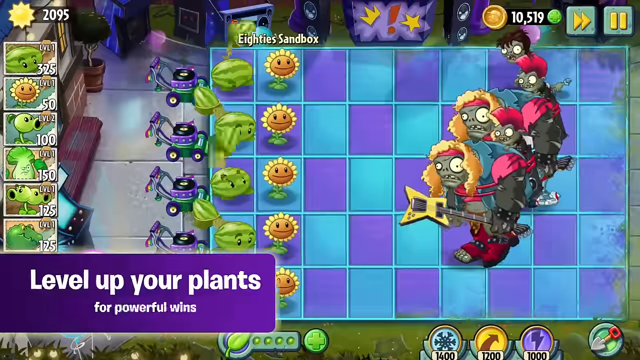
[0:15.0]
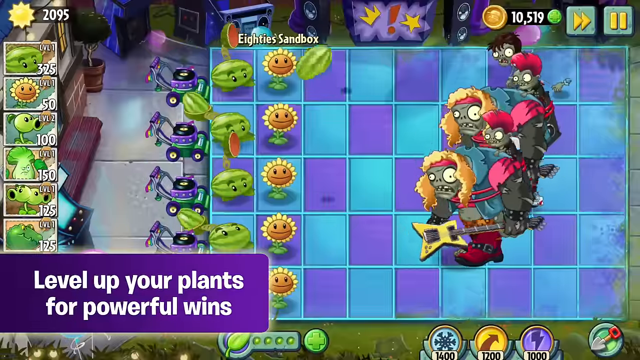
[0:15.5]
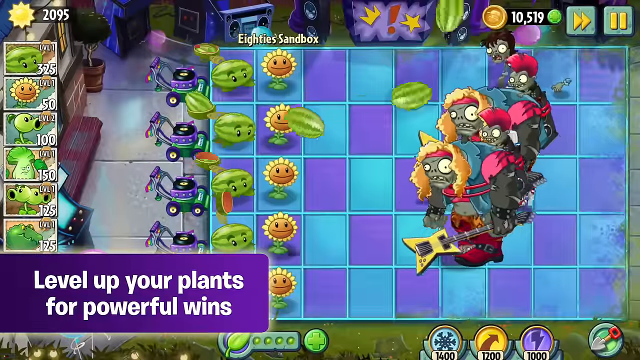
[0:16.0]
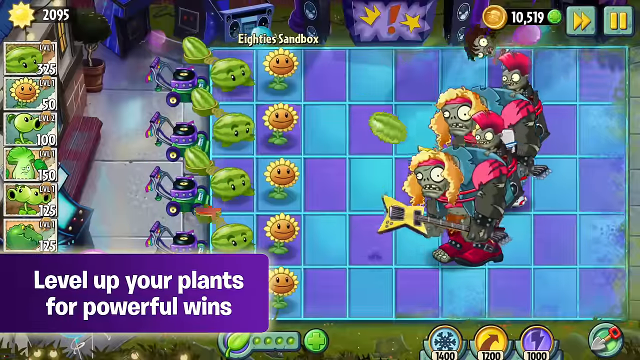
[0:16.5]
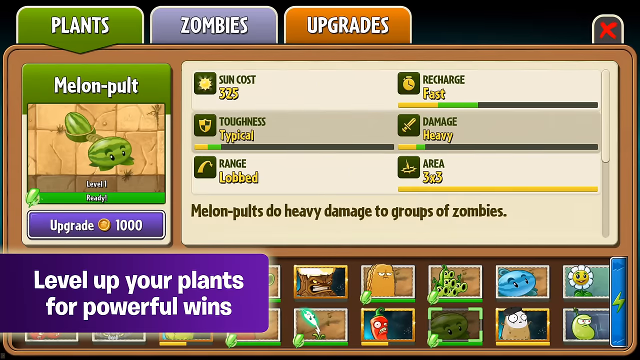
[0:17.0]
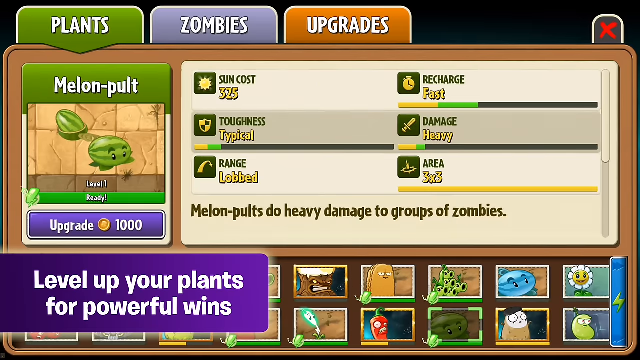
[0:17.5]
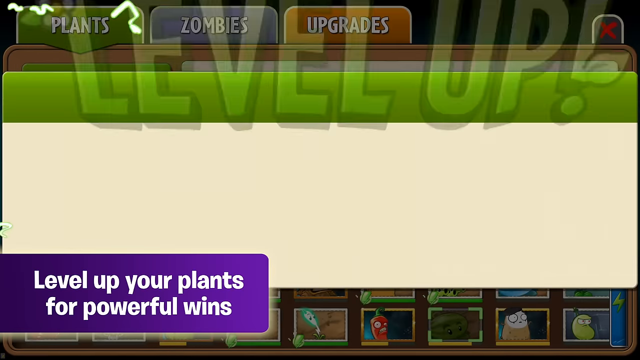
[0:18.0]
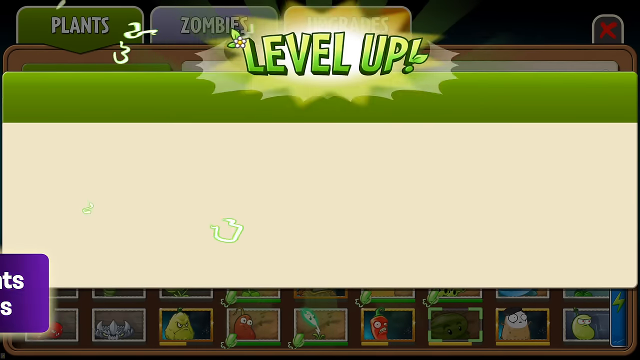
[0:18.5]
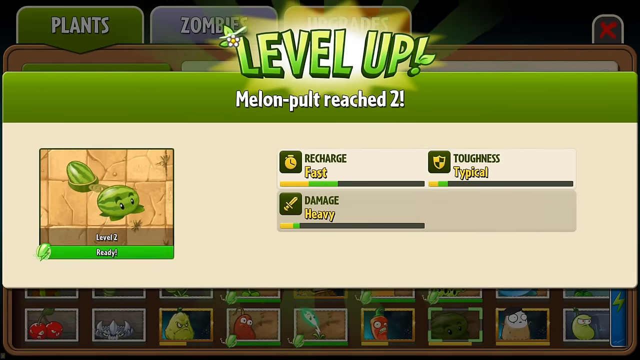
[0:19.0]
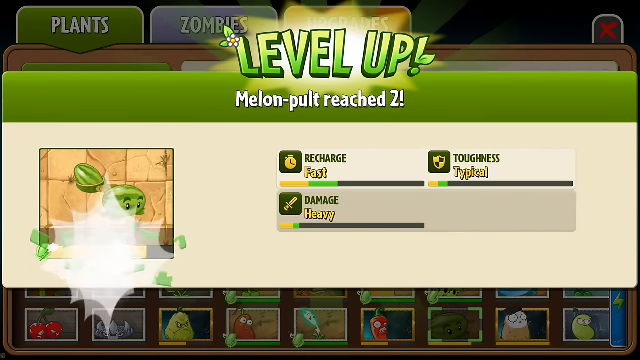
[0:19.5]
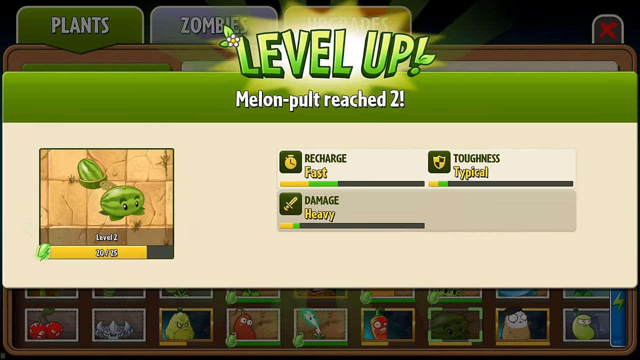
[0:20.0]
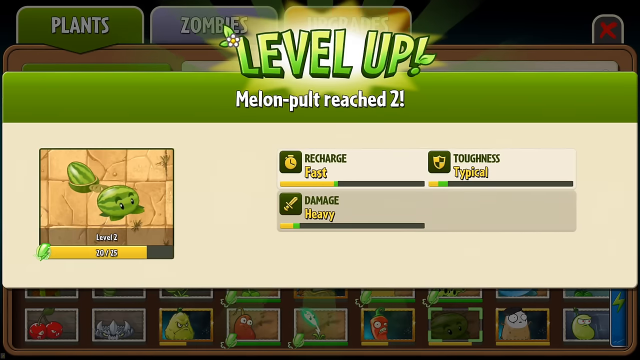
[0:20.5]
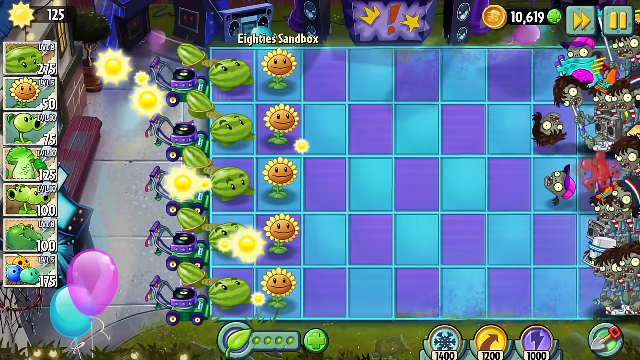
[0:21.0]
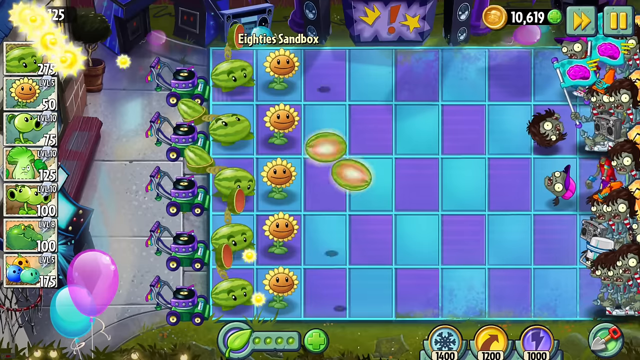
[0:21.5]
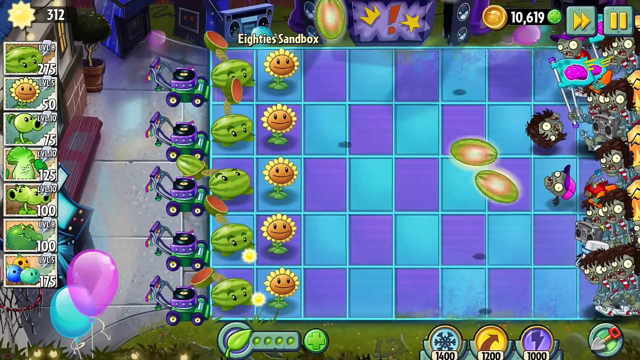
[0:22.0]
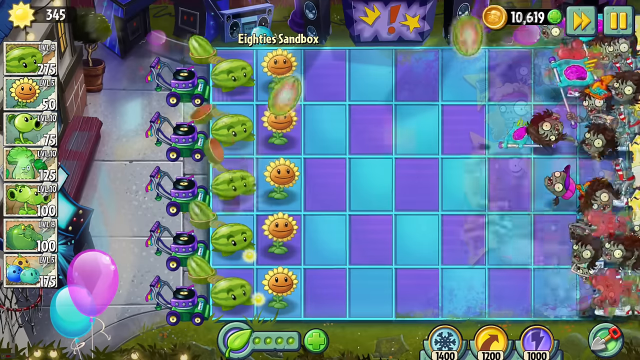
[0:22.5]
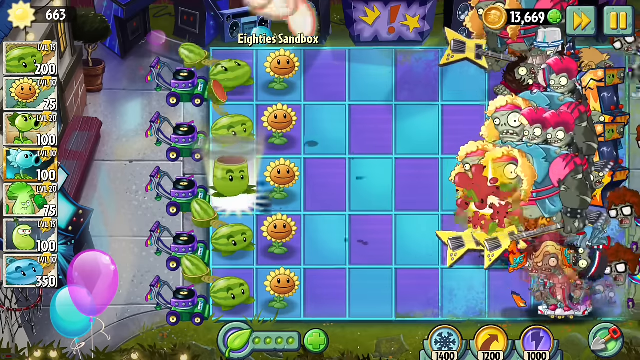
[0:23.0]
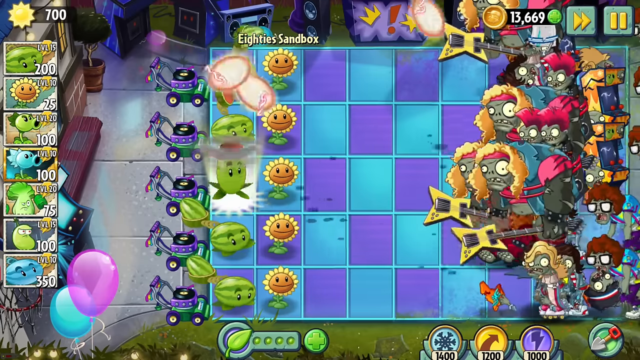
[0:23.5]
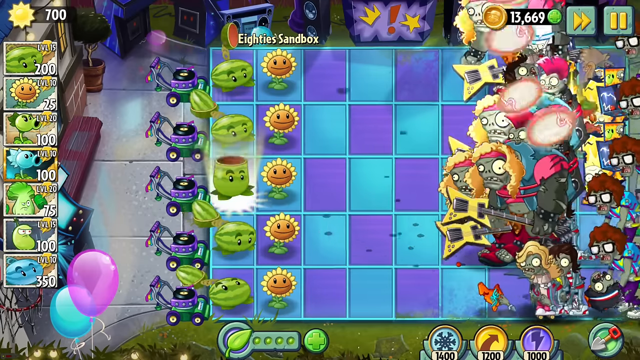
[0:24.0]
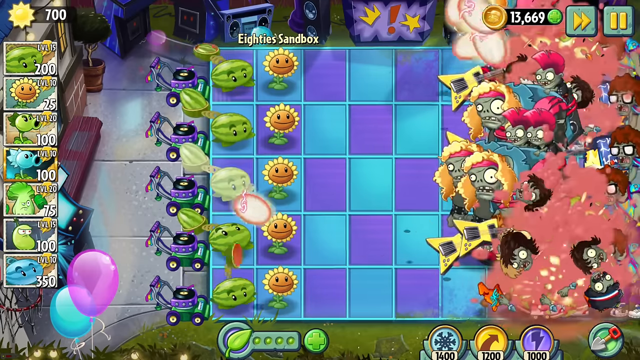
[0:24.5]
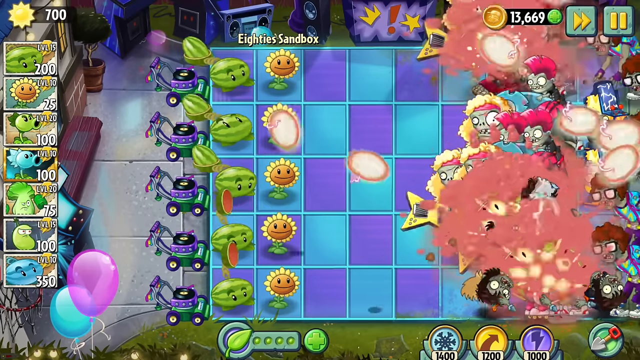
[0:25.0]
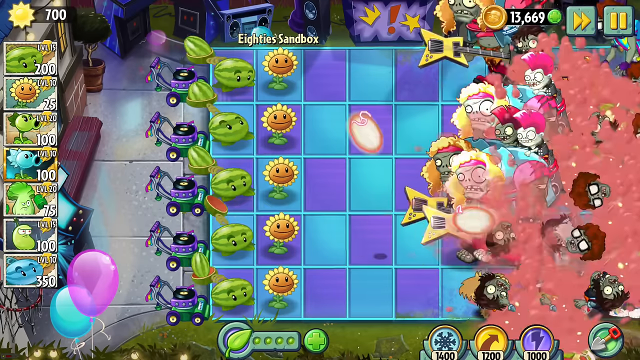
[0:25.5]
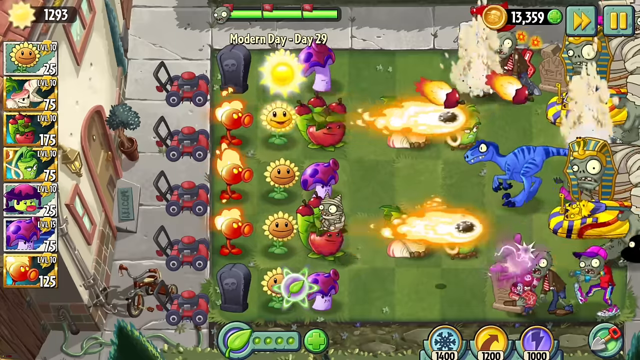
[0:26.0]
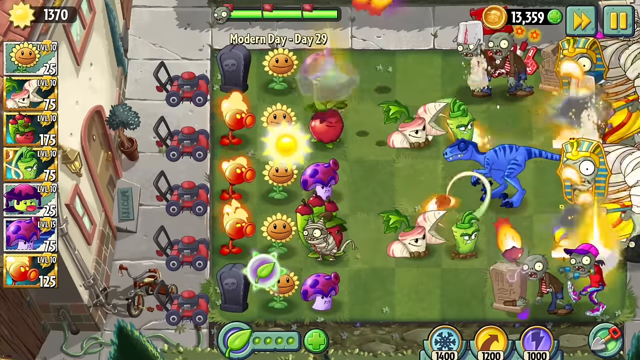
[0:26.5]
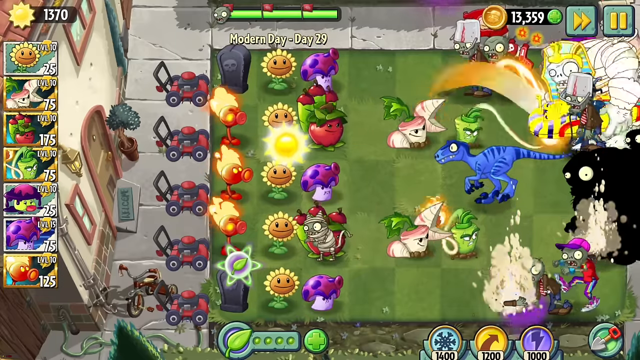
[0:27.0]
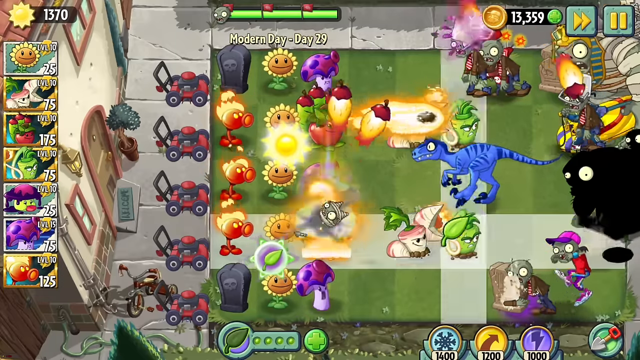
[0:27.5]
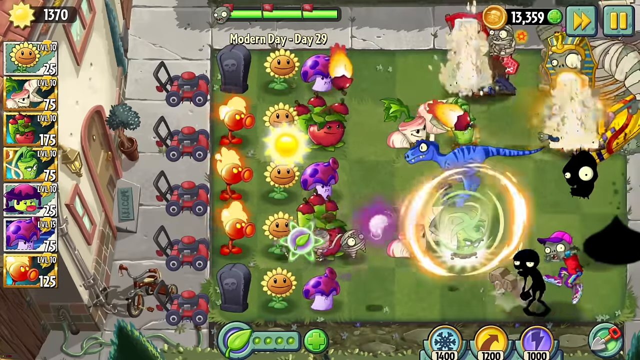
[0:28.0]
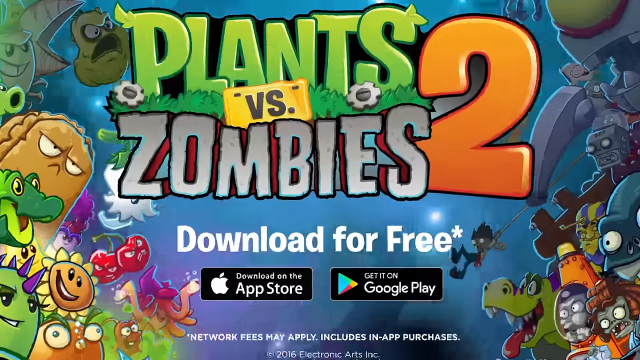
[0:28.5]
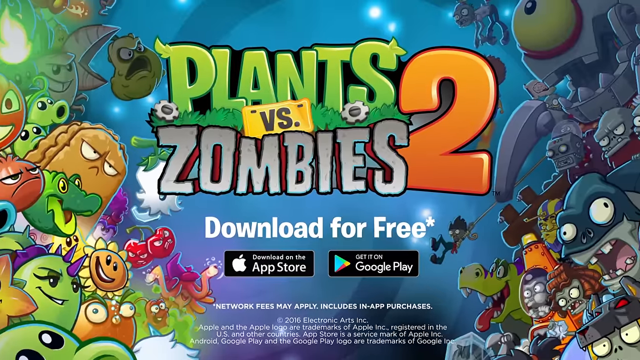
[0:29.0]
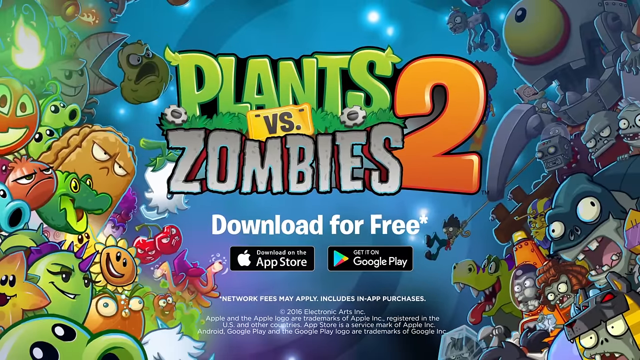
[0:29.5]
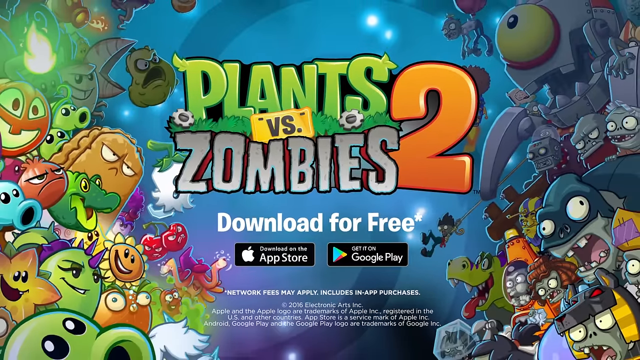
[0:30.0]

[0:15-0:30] On a dark purple and aqua game board, plants on the left-hand side, including watermelons and sunflowers, face the zombies. The sunflowers are making a face. They fire projectiles at gray zombies. One zombie has long blonde hair and carries a big, kind of X-shaped, cream-colored guitar. There are maybe about six zombies: two yellow ones with yellow hair, two with kind of pink mohawks, and one with long black hair. In the lower left-hand side of that screen, a purple box says "level up your plants for powerful wins." The video cuts to a screen of a plant leveling up. On the left side is a picture identifying it as a melon-pult, and a list of stats on the right-hand side includes sun cost, range, recharge, damage, area, and toughness; the melon-pult is noted as dealing heavy damage to groups of zombies. Other plant types appear along the bottom. A level-up graphic says it reached level 2. Back on the aqua game board, melon-pults and sunflowers fight maybe about 20 zombies on the right-hand side of the screen, including a bunch of yellow-haired zombies with guitars, the pink mohawk zombies, and maybe about four or five other kinds of zombies. They wear kind of colorful outfits and walk from the right-hand side of the screen toward the left, and the plants' projectiles cut them down. On a green grassy game board, a bunch of plants fire projectiles, and among the zombies on the right-hand side is something like a velociraptor. At the end, the game name appears: Plants vs. Zombies 2, with "Plants" in green, "Zombies" in gray, "versus" in a yellow box with black text, and a big orange 2. On the left-hand side is a bunch of plants, probably ones used in the game, and on the right-hand side are the zombies. White text says "download for free," followed by a Download on the App Store logo and, on the right-hand side, a Google Play download with its logo.